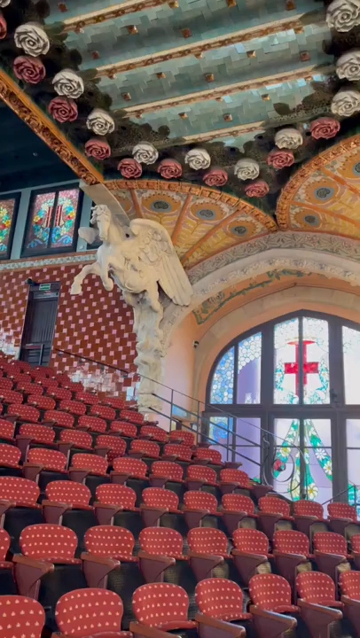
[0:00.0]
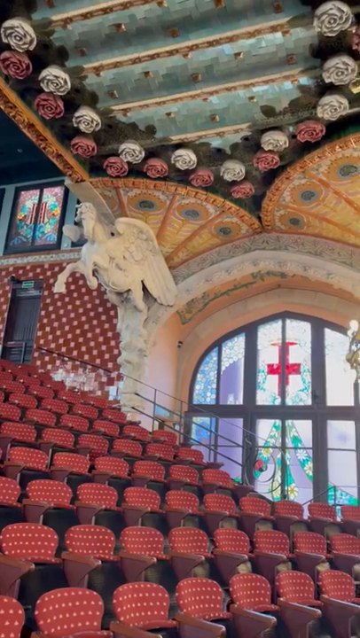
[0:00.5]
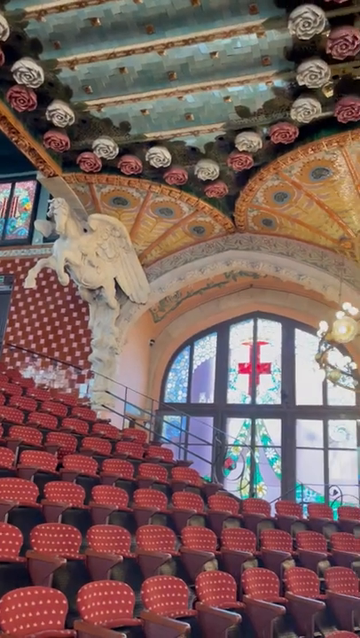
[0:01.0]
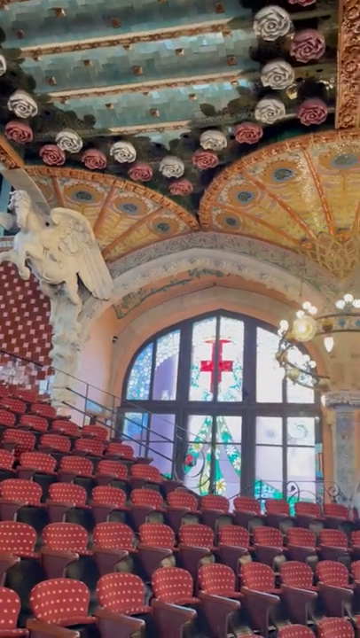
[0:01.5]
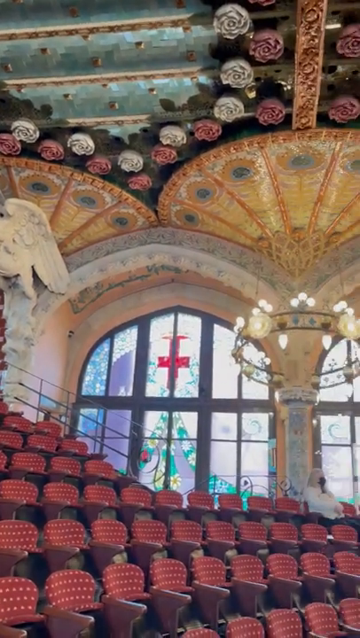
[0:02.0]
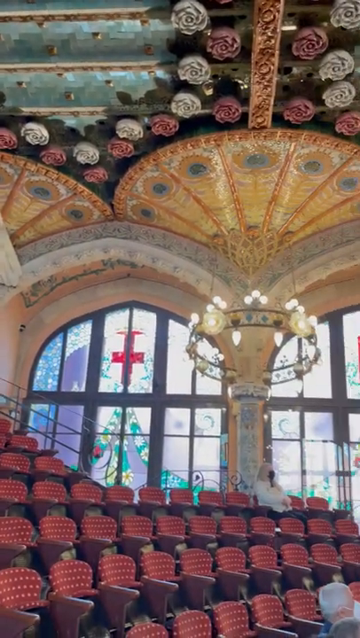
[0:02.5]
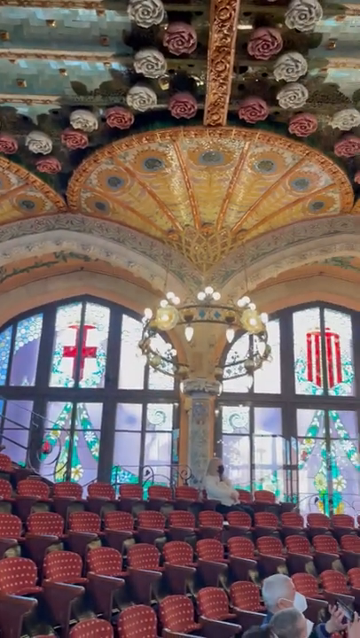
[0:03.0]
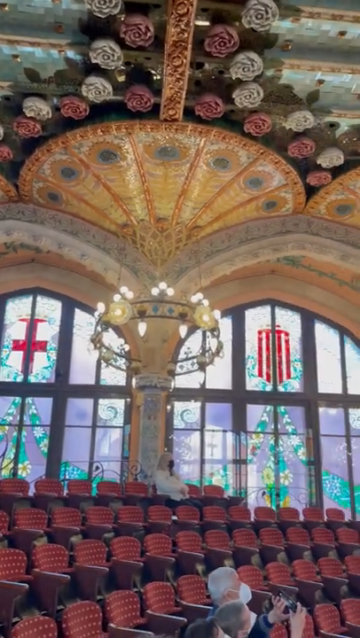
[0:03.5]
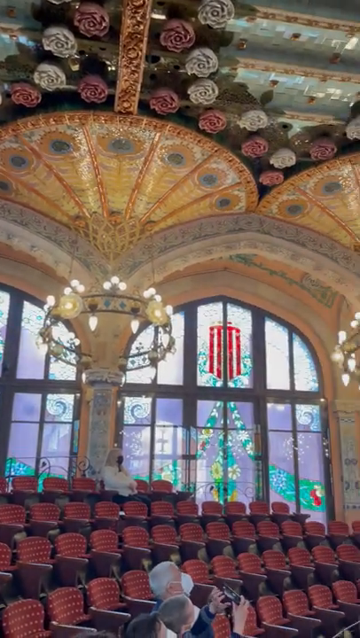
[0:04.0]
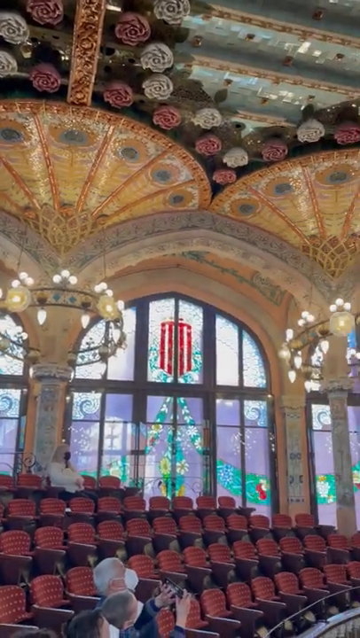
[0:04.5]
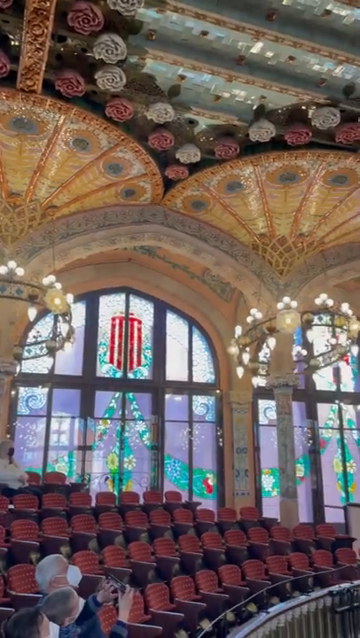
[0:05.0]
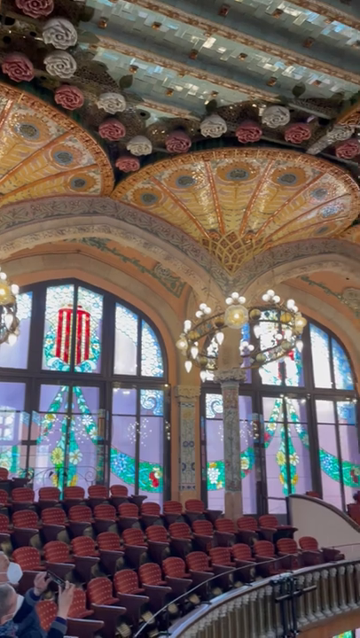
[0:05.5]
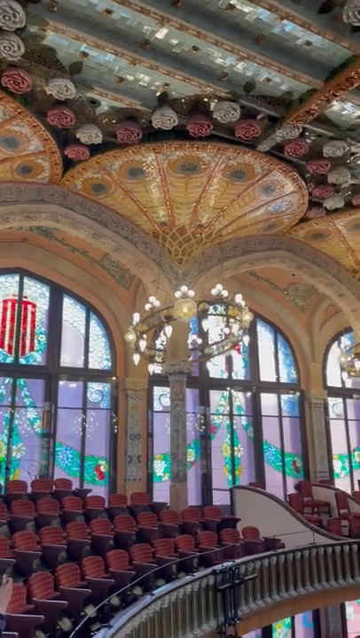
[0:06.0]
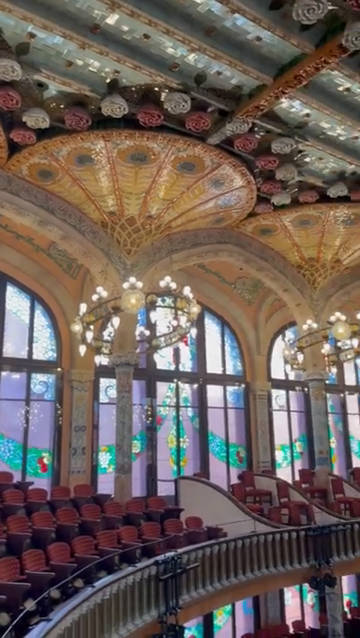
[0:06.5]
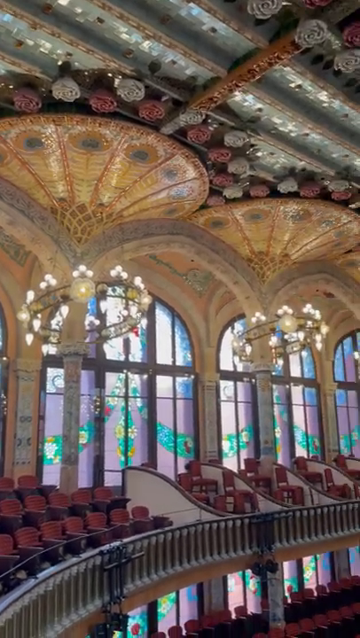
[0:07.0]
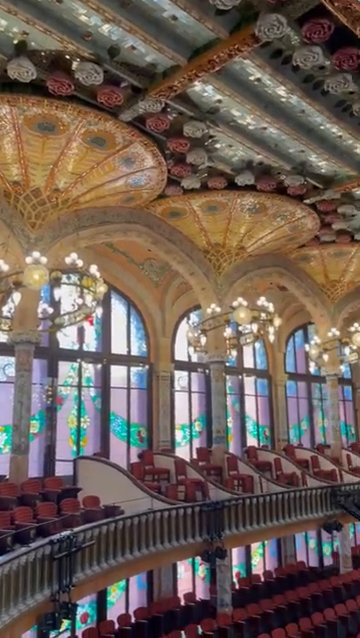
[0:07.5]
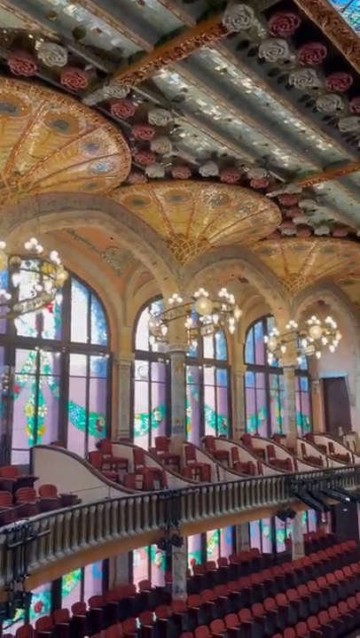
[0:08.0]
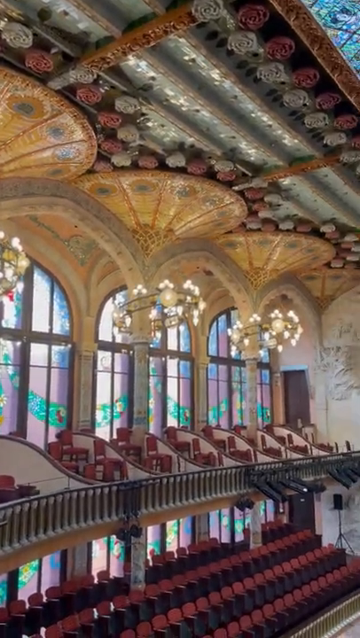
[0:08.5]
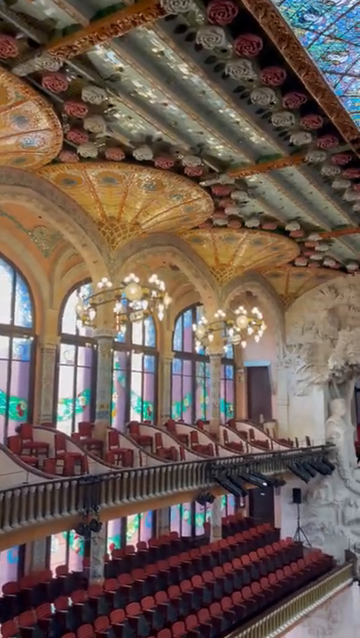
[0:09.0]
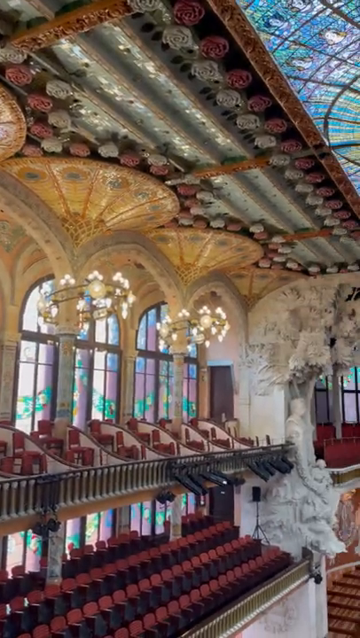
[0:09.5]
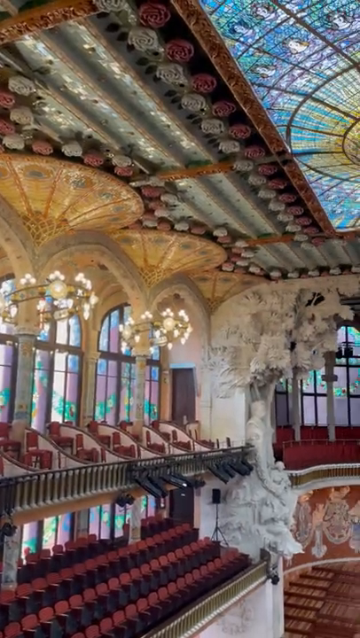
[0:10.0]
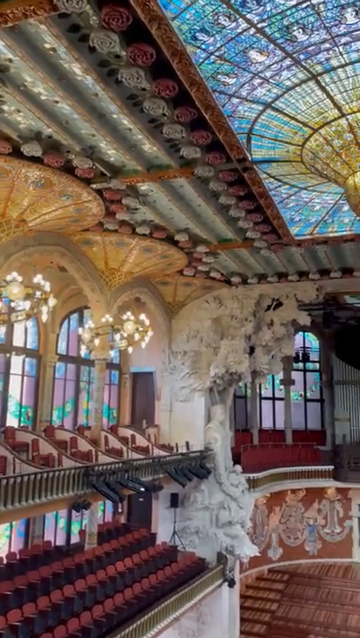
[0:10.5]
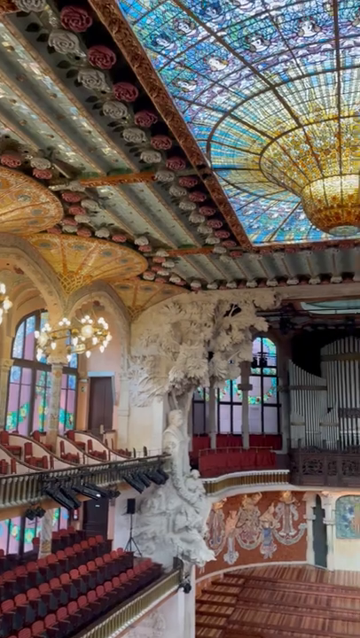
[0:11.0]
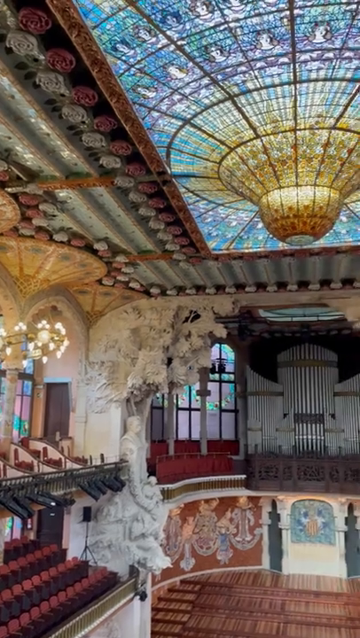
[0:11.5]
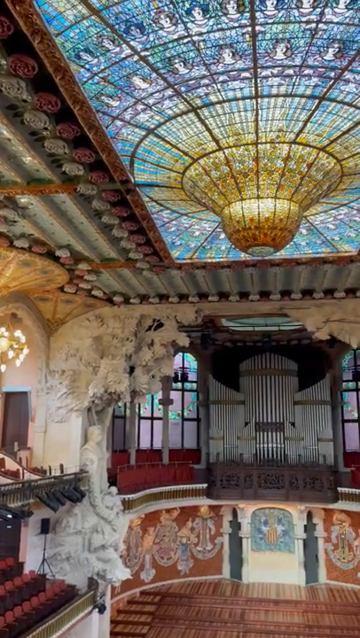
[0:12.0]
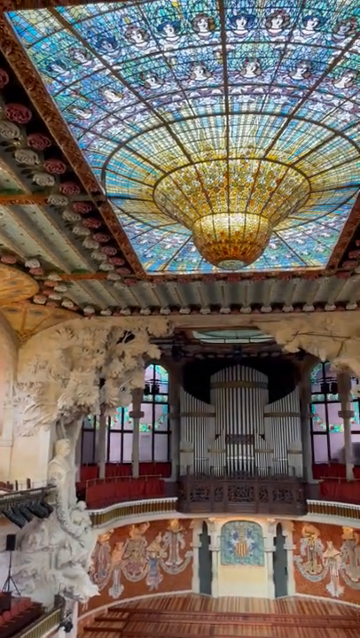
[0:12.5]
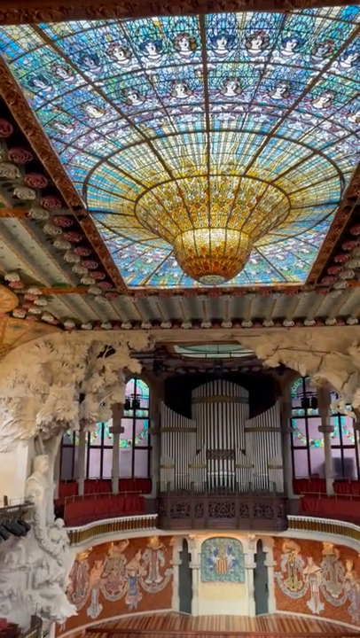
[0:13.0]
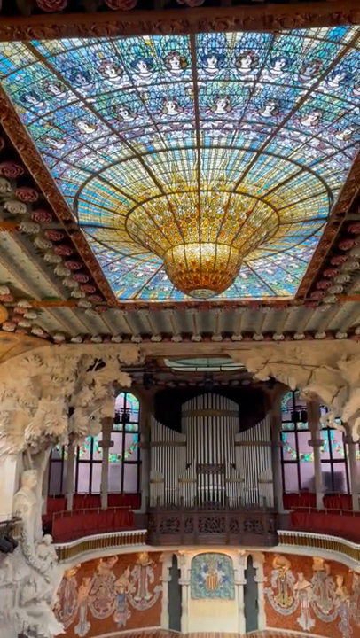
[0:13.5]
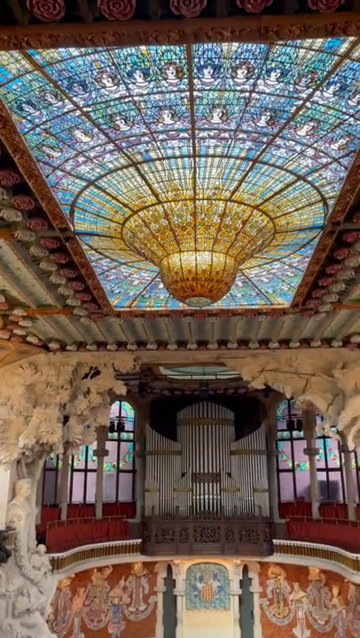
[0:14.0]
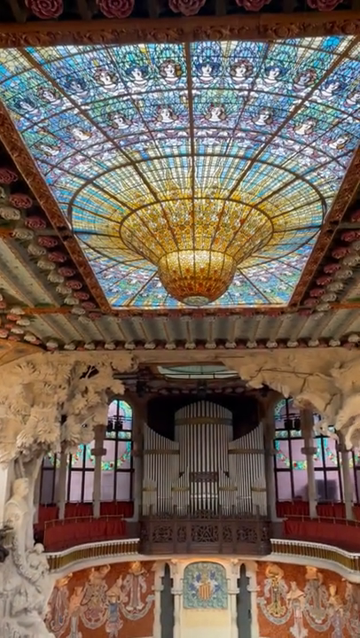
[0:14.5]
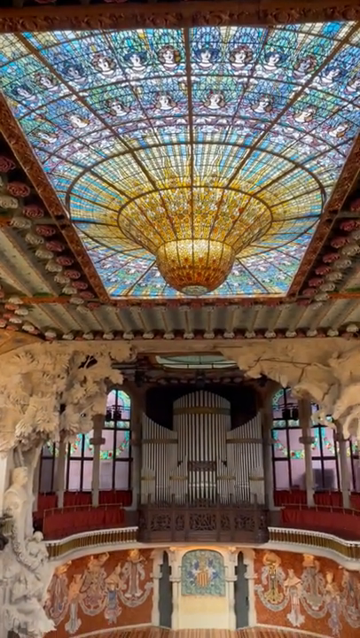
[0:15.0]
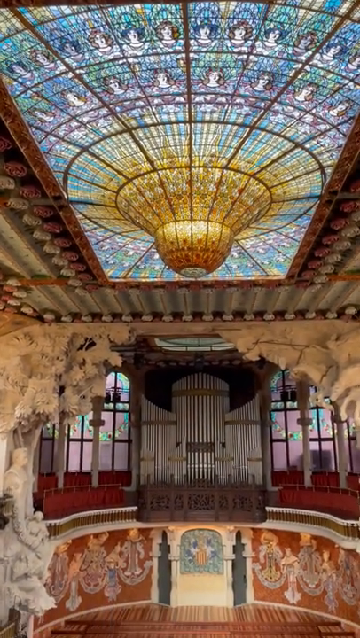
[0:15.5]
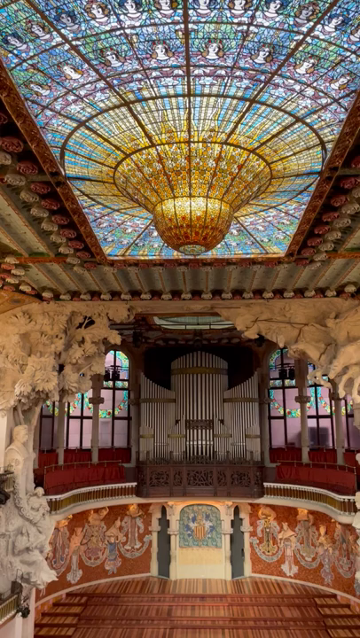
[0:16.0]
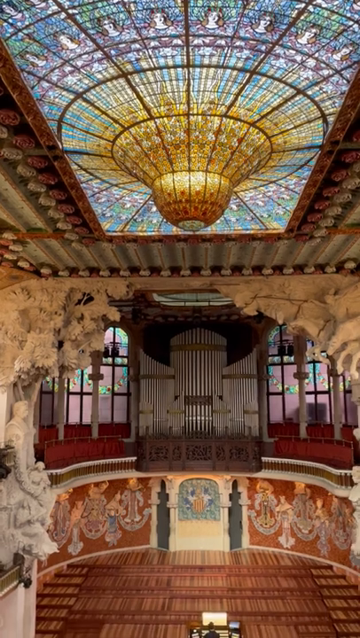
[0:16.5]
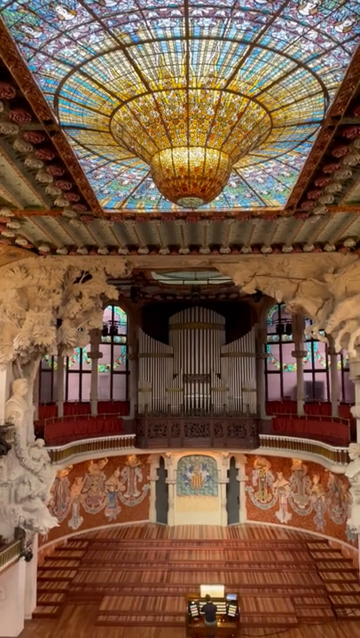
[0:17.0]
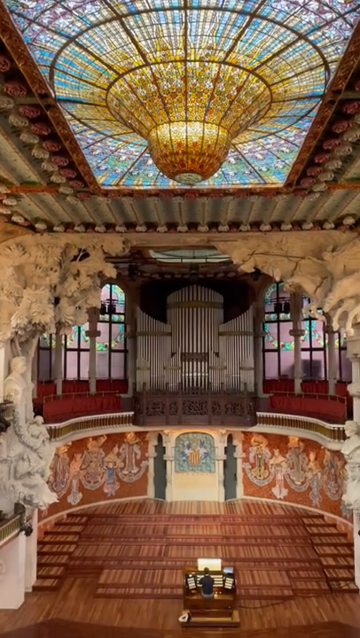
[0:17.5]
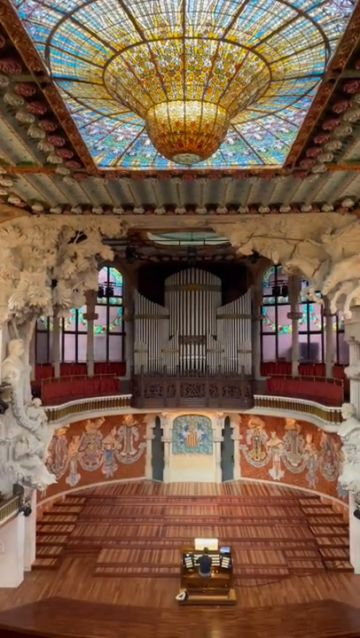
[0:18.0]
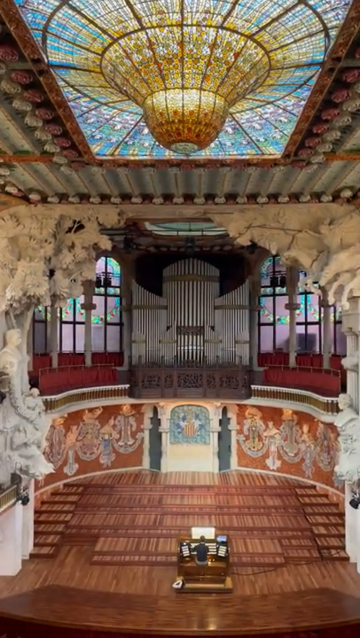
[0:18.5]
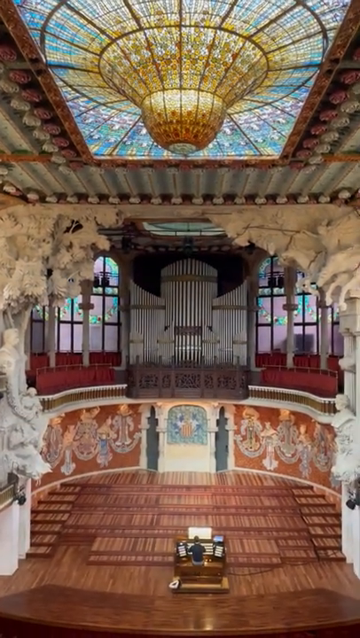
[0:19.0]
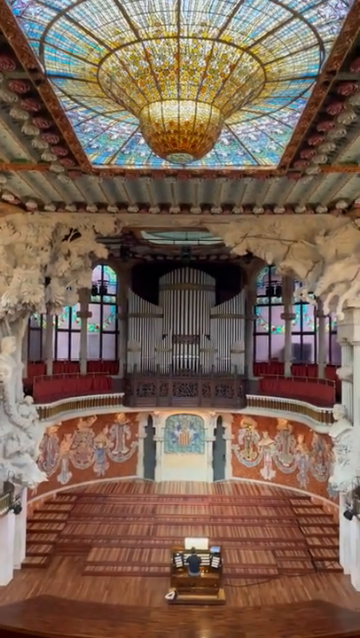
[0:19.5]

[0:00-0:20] The video takes place inside an old church that appears to have been built between the Renaissance period and the 17th century, judging by the design of the organ area, the intricate designs on the ceiling and the stained glass art on the windows. There are also what look like gargoyles inside the church, as well as buttresses. The church has three levels: a ground floor, a mezzanine section and a level above. In the middle is a very elaborate organ surrounded by red seats. On the ground floor a person is playing what looks like a digital keyboard with many screens; the exact kind of instrument is unclear. The church could be a real one or possibly a digital church from a video game.